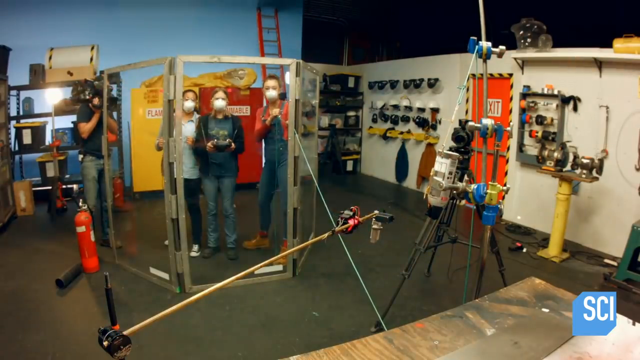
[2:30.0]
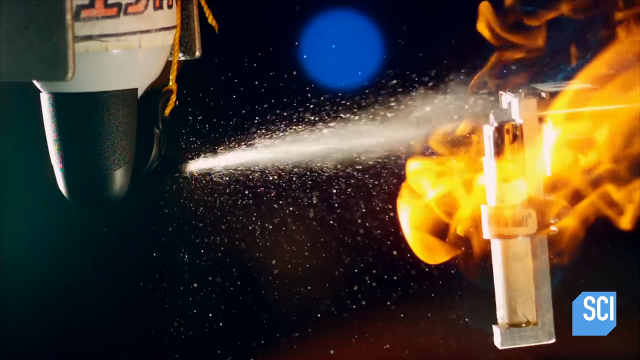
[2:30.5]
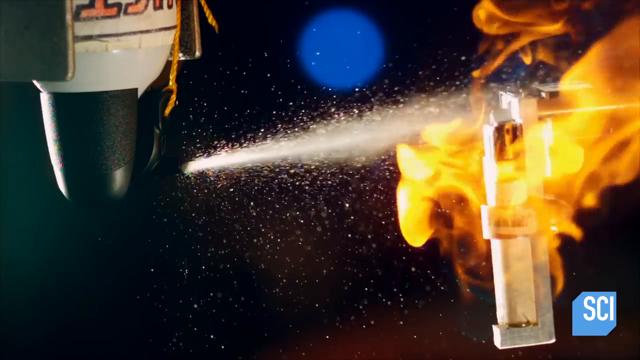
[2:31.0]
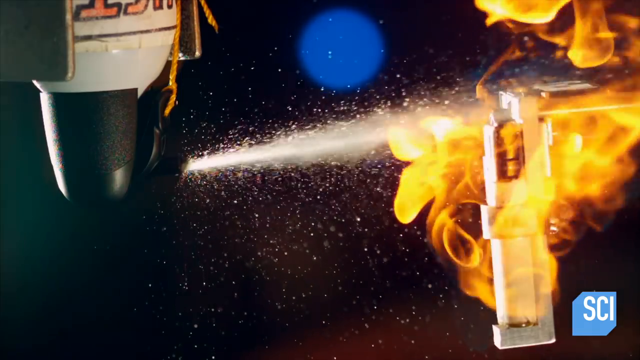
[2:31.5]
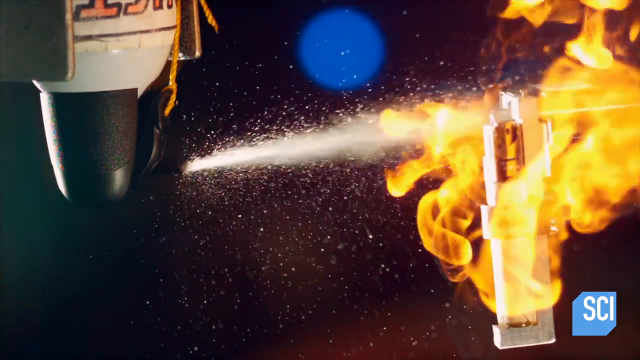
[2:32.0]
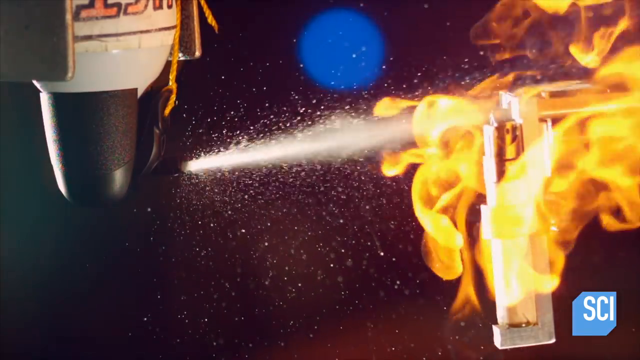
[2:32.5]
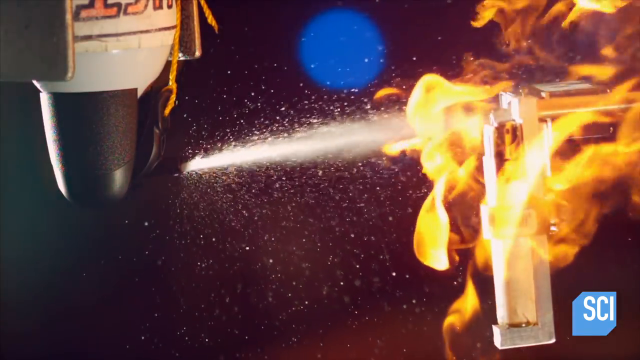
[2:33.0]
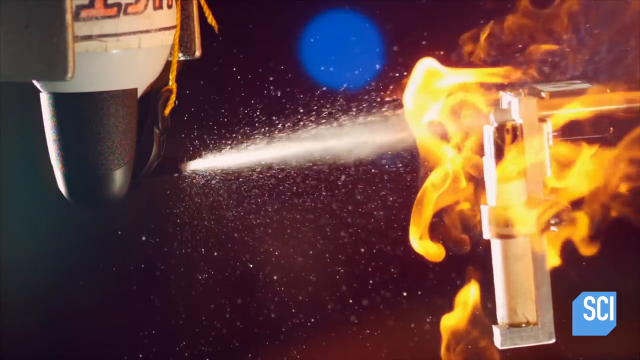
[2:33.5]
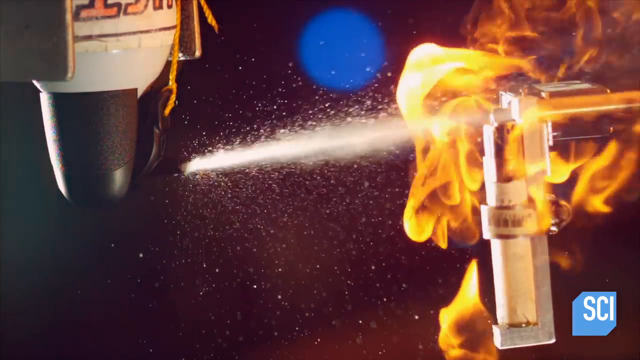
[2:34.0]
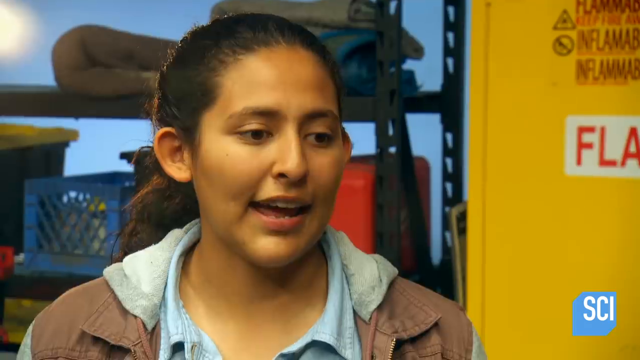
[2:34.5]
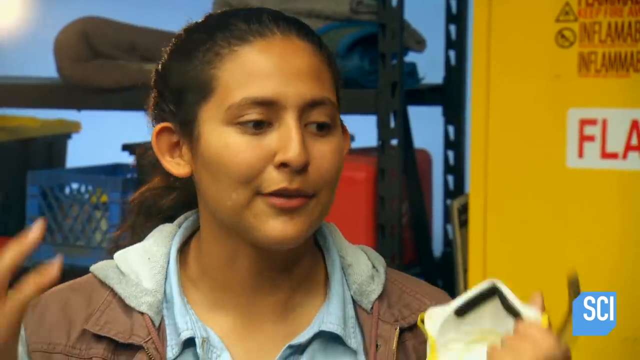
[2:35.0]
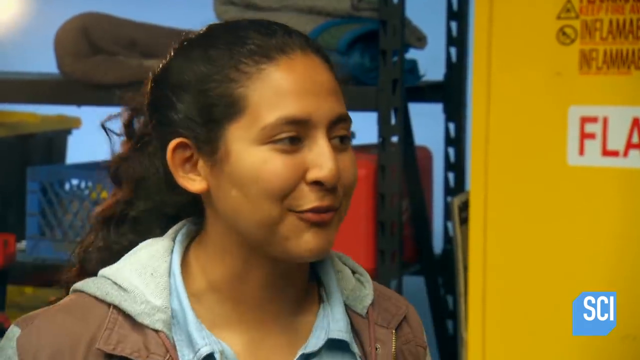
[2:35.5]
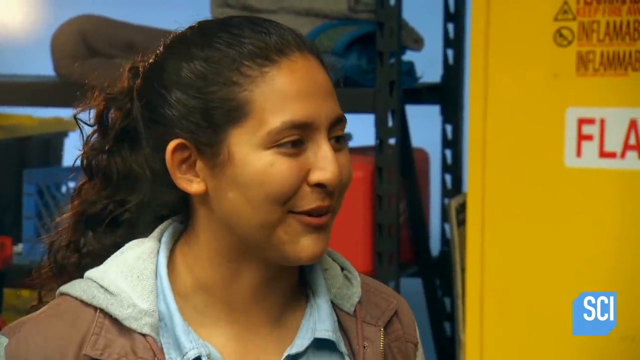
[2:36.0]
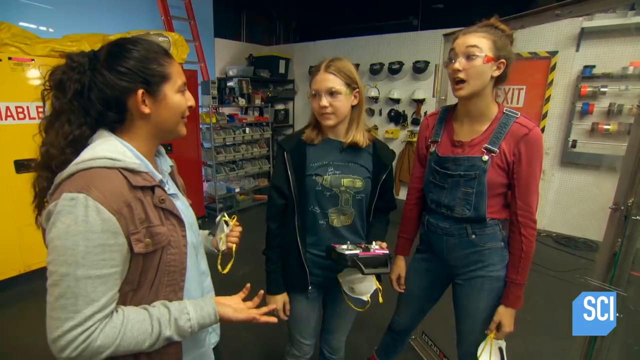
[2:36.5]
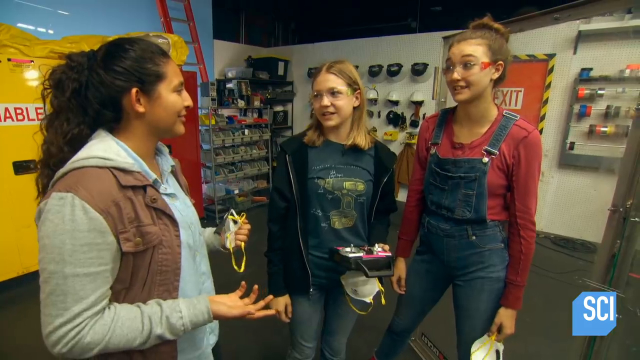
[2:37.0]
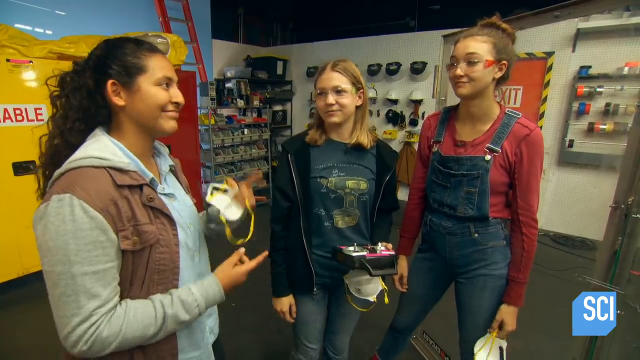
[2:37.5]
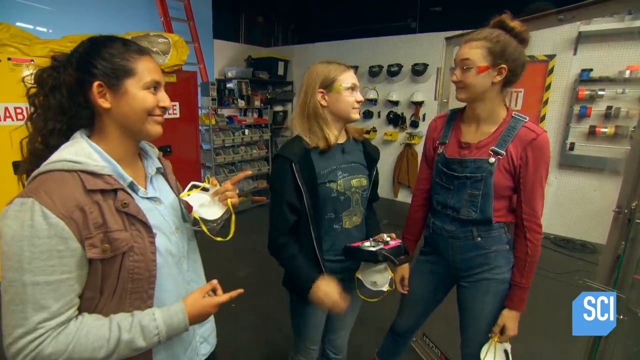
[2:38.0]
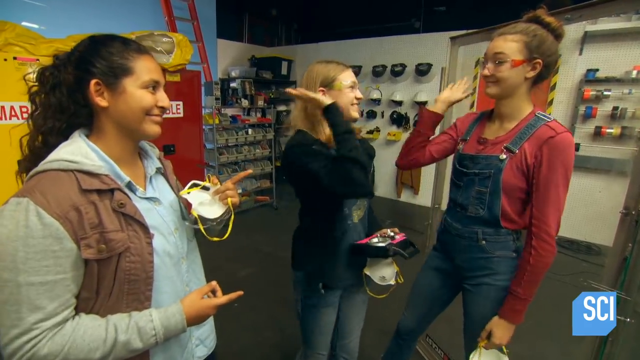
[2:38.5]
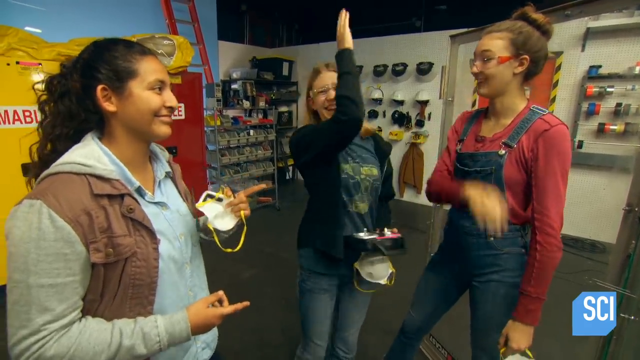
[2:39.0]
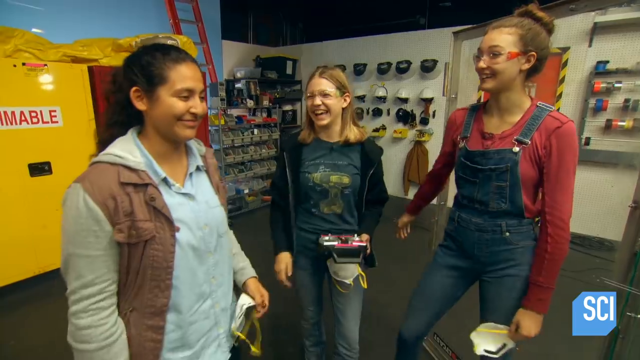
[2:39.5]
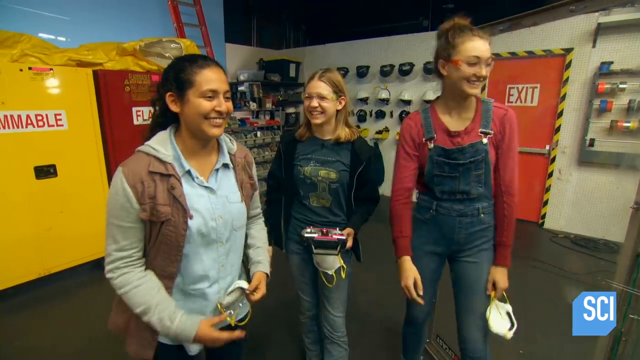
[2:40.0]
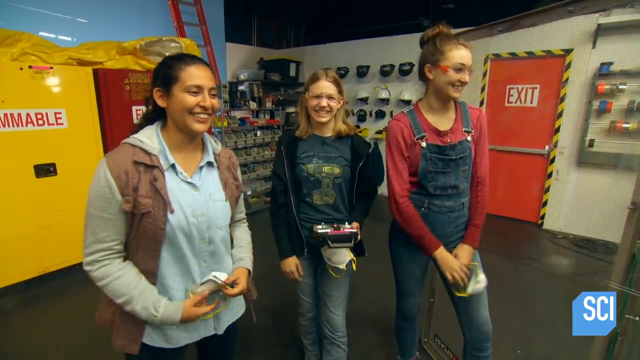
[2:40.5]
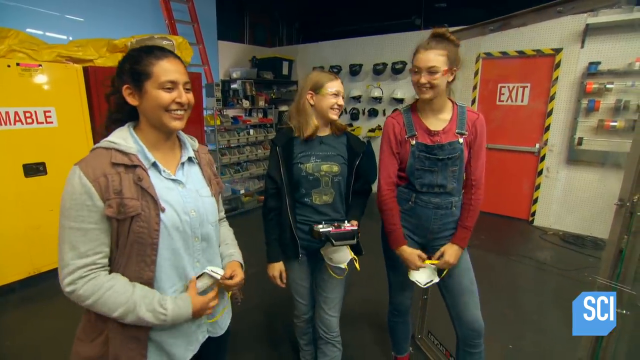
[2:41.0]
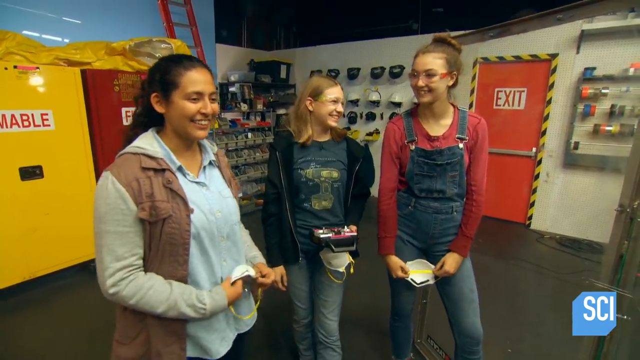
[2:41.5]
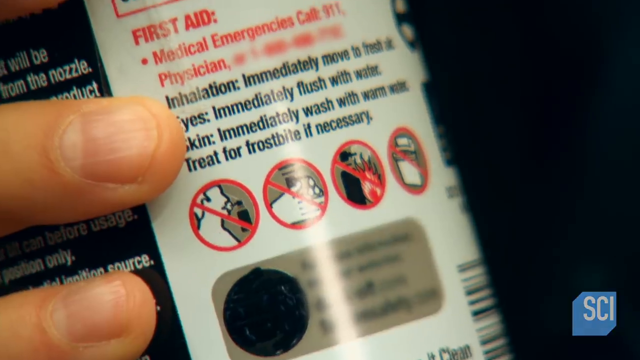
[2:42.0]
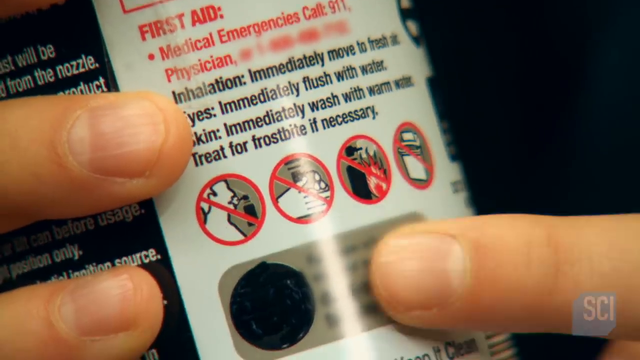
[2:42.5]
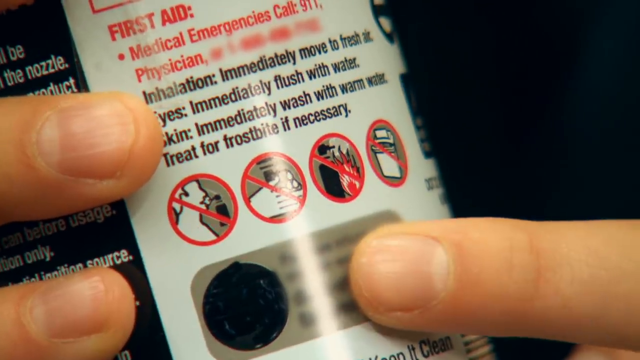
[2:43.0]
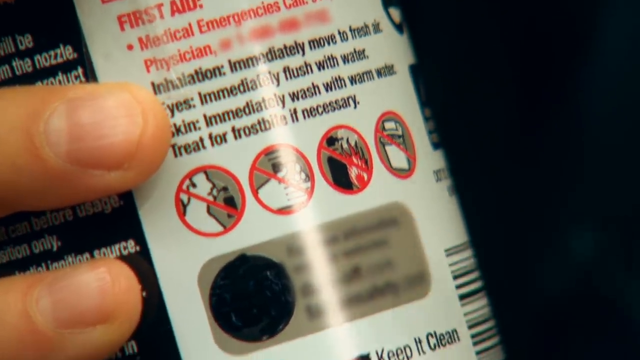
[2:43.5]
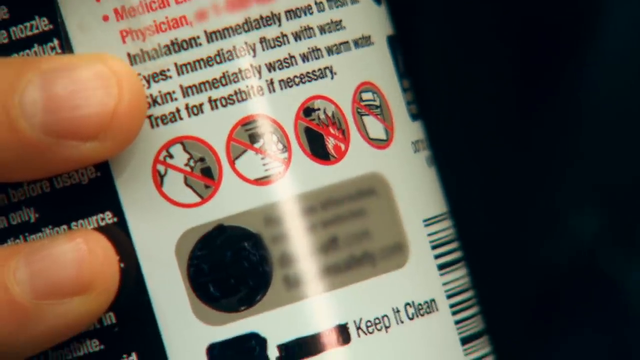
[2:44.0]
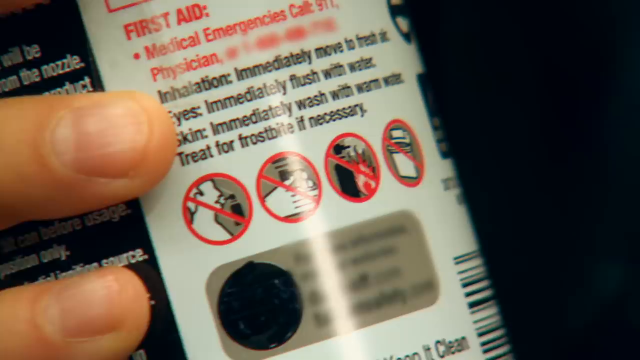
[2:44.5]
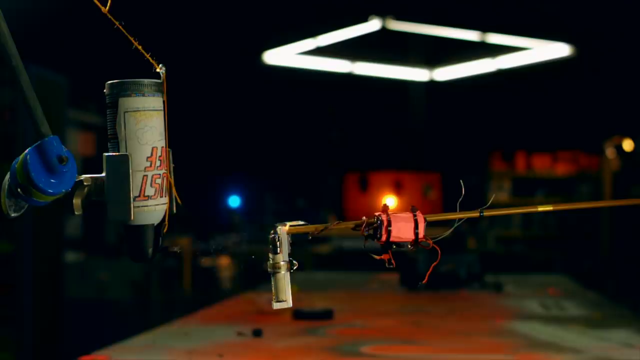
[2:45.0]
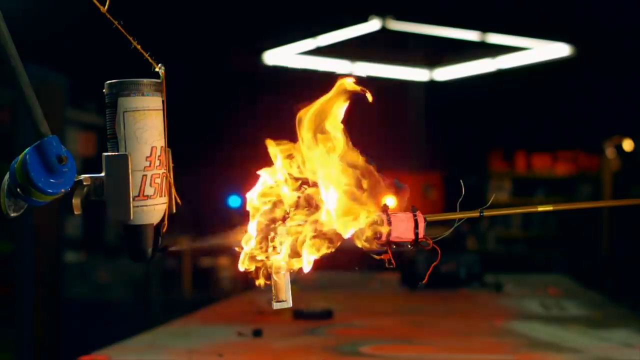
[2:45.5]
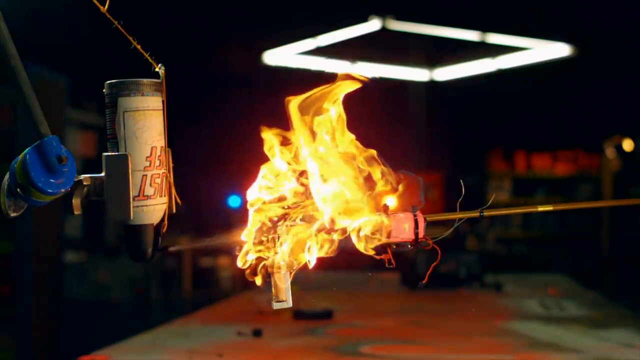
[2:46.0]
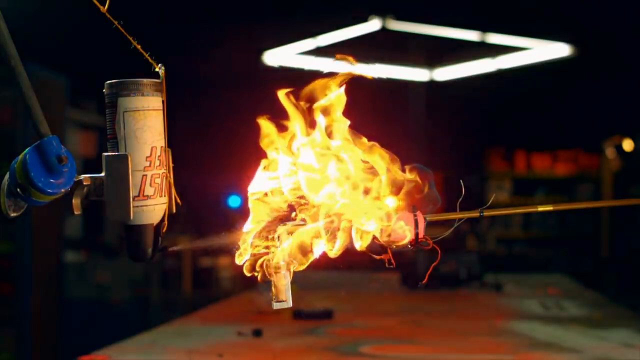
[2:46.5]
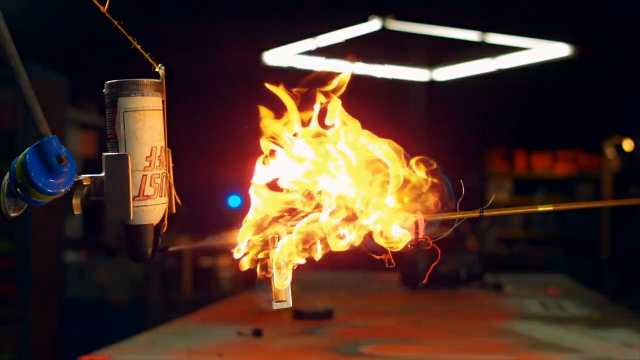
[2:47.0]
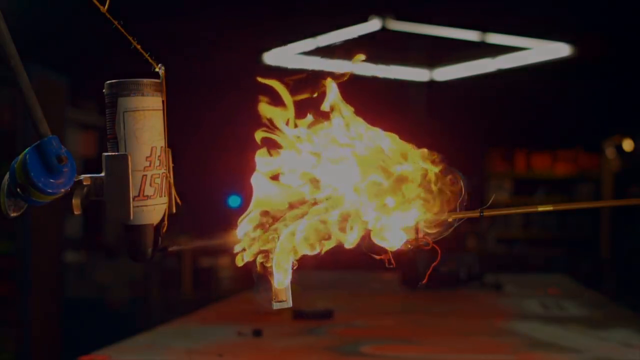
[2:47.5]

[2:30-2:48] The title "How flammable is compressed air Mythbusters" appears. One girl explains what happened. A second girl holds a can of Bust-Off, showing what not to do and the hazard indications. The Bust-Off spray sprays over the top of a lit lighter and a flame comes out. With the experiment done, the girls have their masks off and one girl's goggles are off, and a couple of the girls high-five.